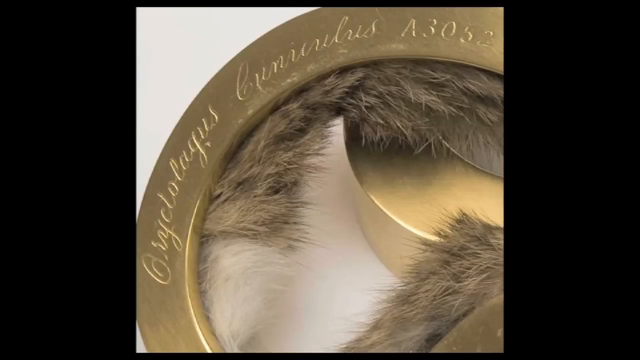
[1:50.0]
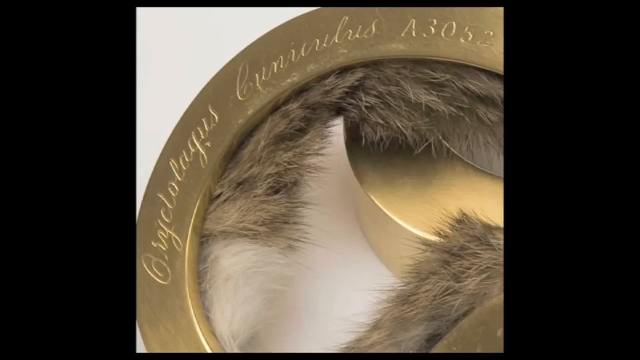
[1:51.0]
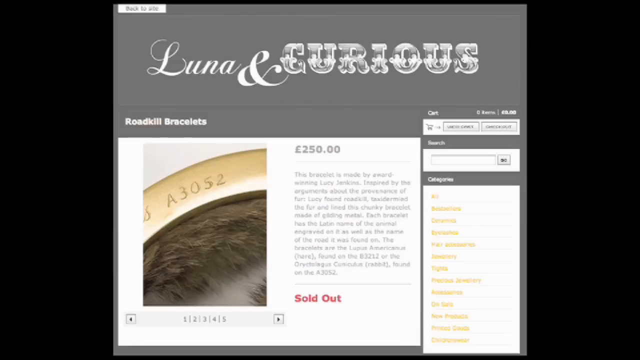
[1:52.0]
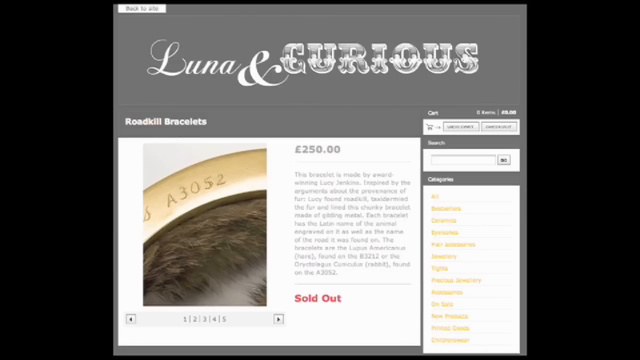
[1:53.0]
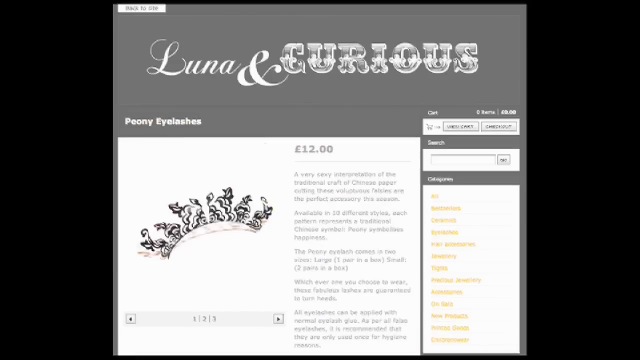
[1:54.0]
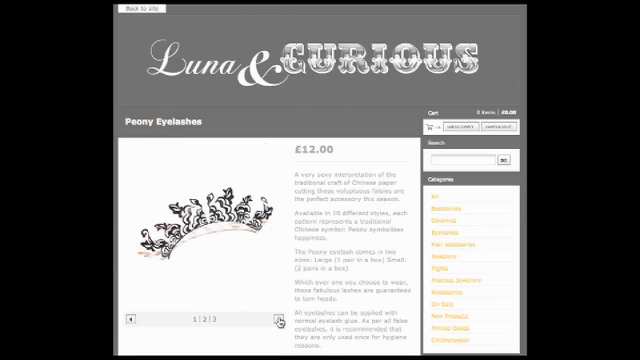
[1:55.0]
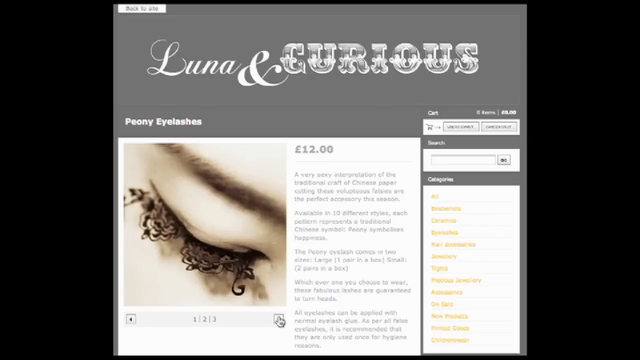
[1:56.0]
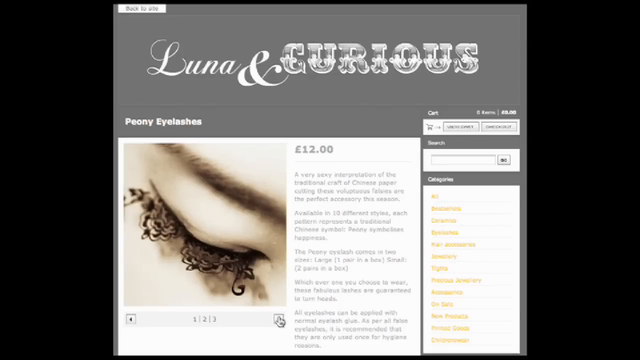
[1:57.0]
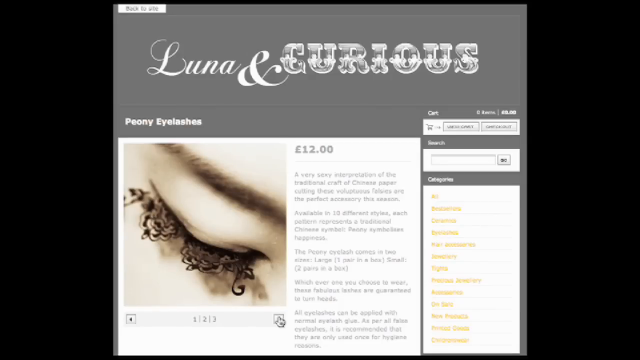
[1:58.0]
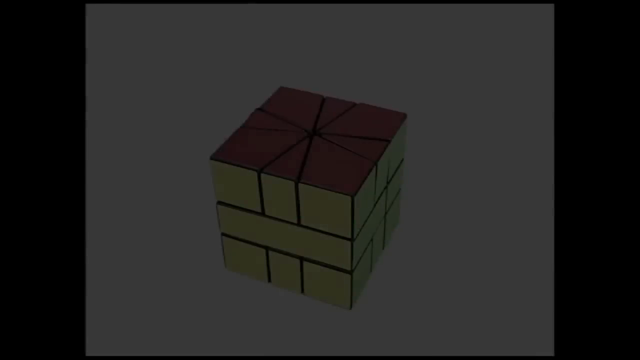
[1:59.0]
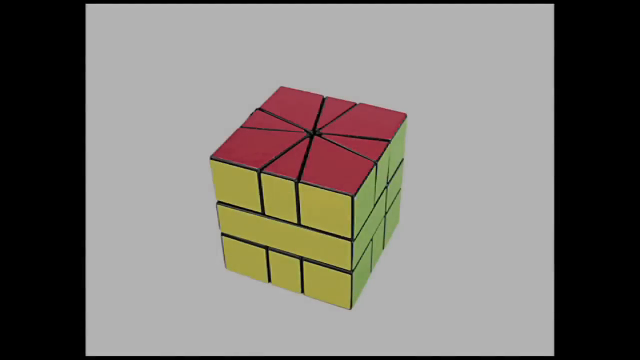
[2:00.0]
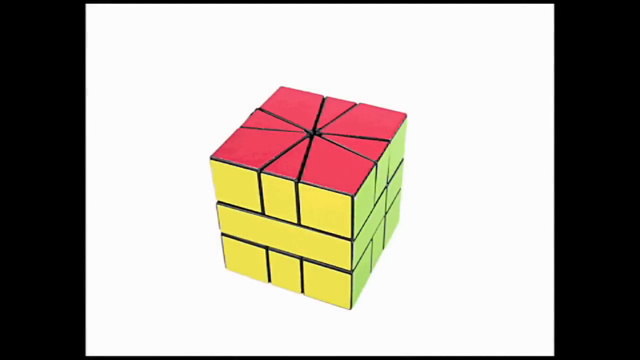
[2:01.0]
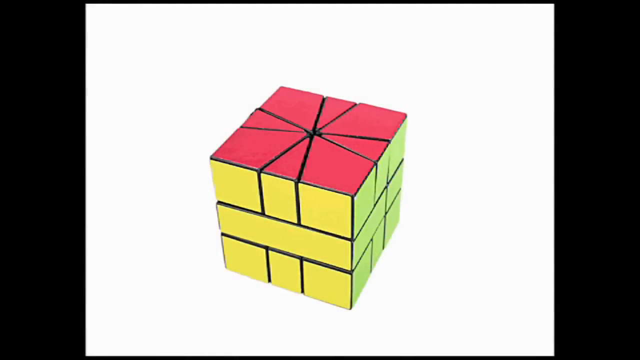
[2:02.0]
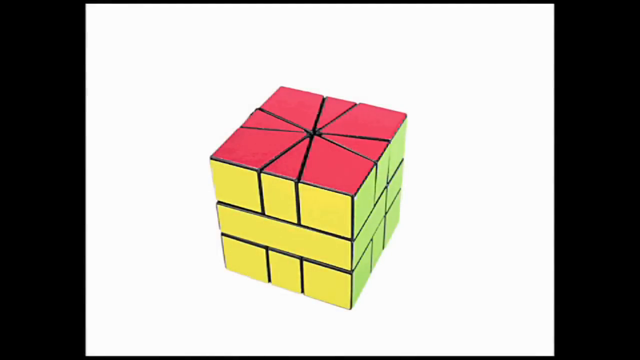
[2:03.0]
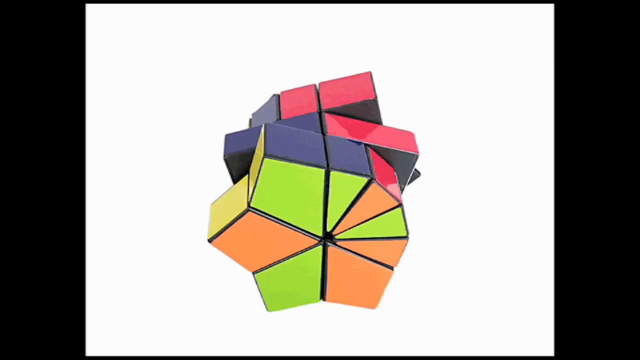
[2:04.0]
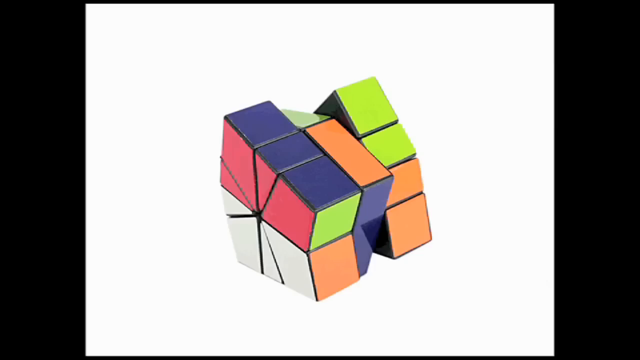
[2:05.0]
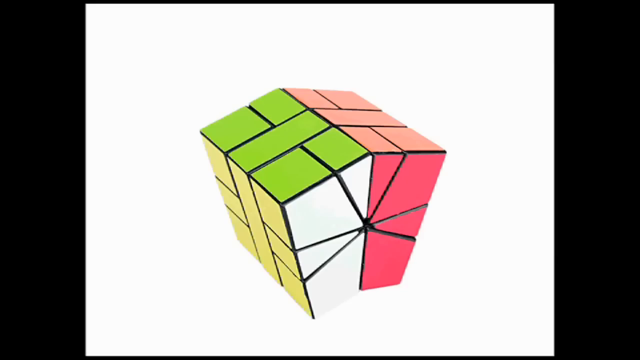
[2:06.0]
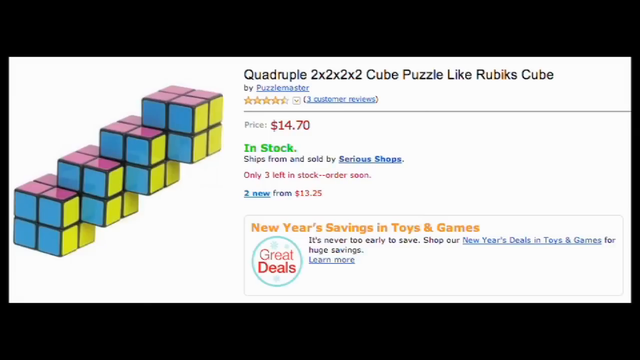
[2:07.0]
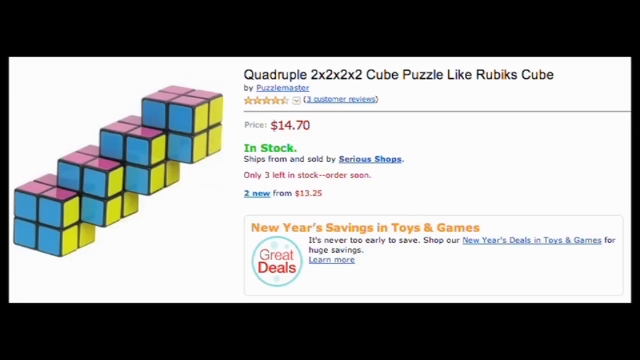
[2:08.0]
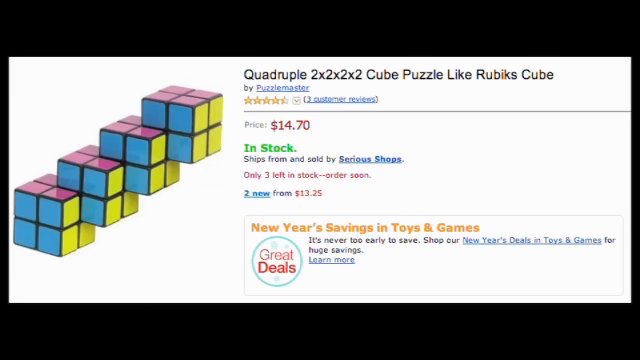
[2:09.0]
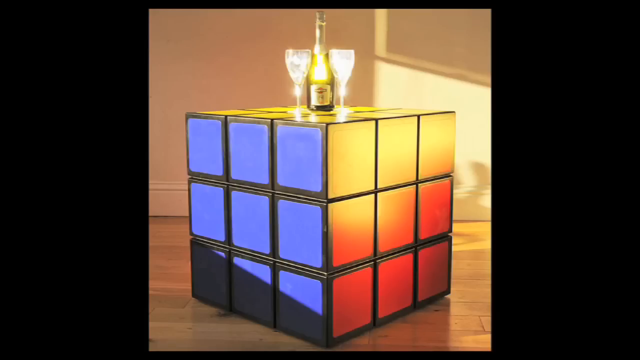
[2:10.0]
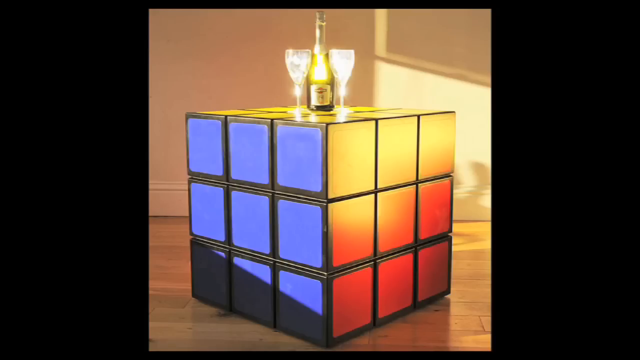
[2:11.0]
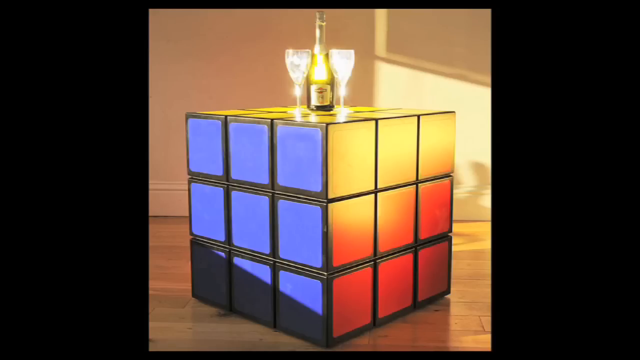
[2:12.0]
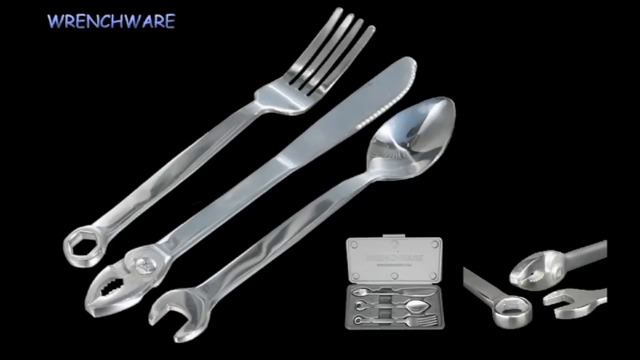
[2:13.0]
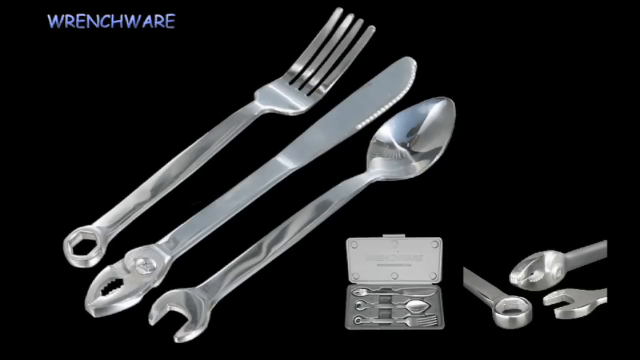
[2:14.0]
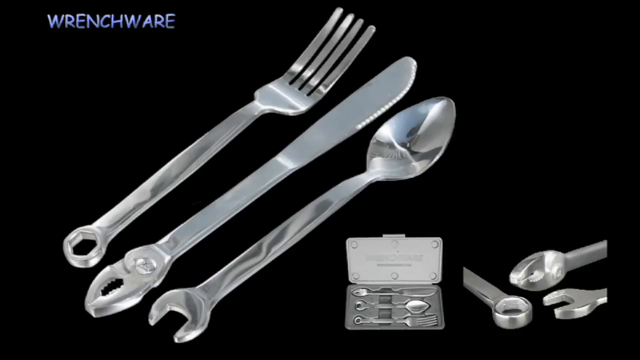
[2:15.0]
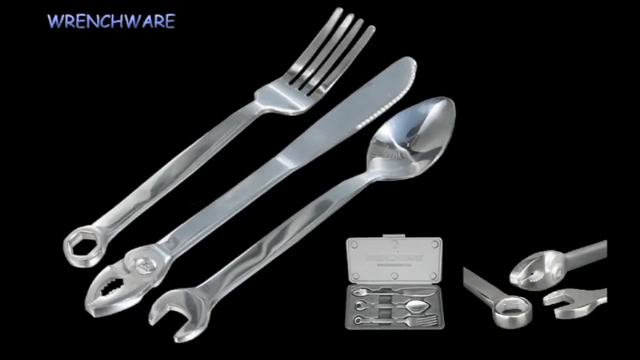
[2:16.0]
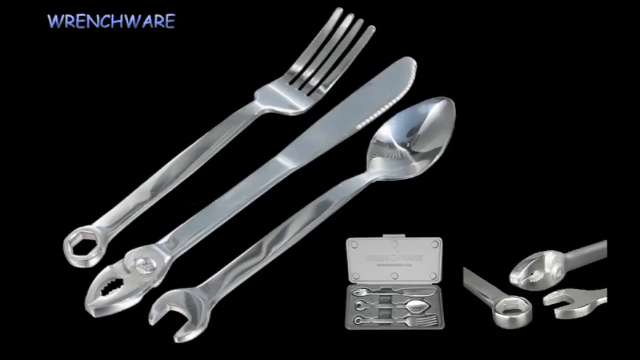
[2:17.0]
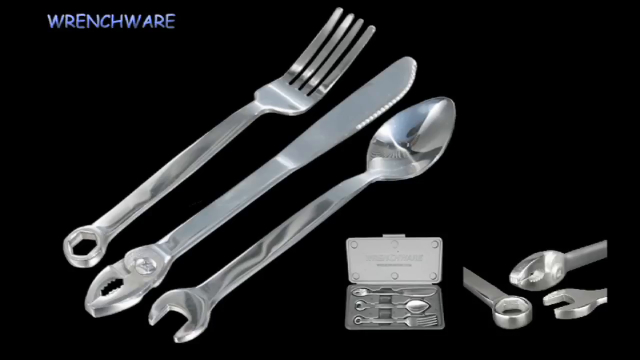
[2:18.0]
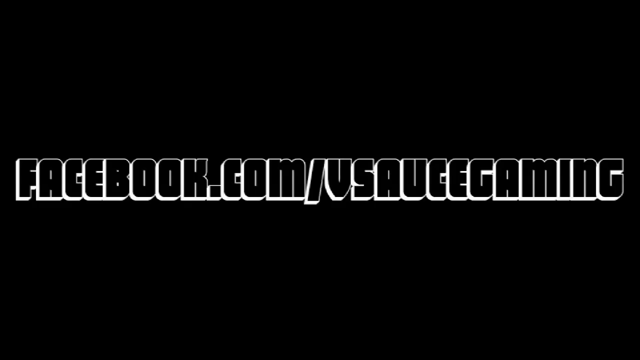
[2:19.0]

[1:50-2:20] A gold ring with fur inside it is shown. A website reads "Luna and Curious", with products for sale underneath, including the gold ring. The video cuts to what kind of looks like fake eyelashes, which are then shown on somebody's eye. Next is something that looks like a Rubik's Cube but has different geometric shapes on it, including rectangles and triangles, and different versions of it appear in colors including purple, green and orange. Four Rubik's Cubes are shown connected, with text in the top right reading "quadruple two by two by two by two cube puzzle like Rubik's Cube". Another Rubik's Cube has two wine glasses on top of it with a green bottle of wine in the middle. Silver cutlery follows, and then a website with a black background.